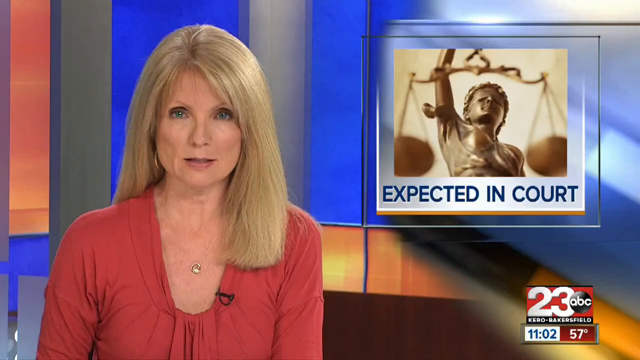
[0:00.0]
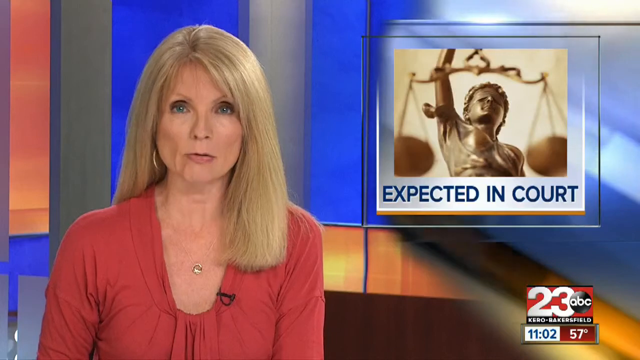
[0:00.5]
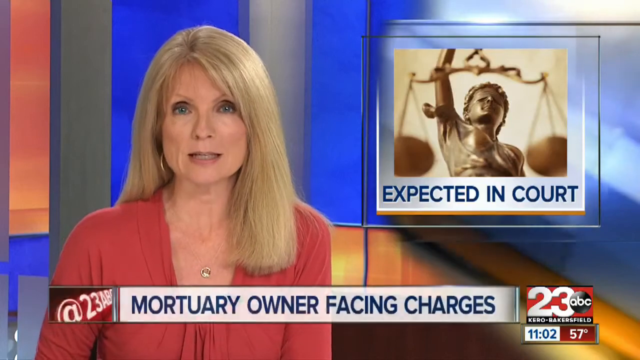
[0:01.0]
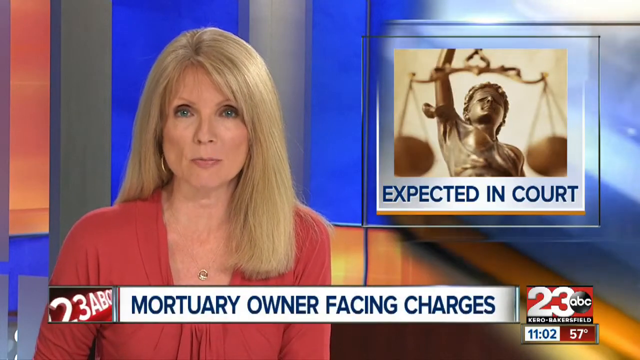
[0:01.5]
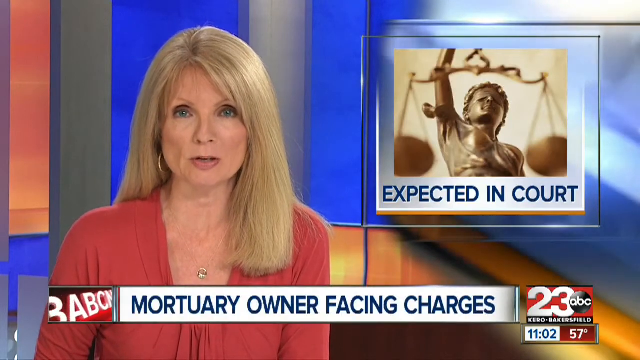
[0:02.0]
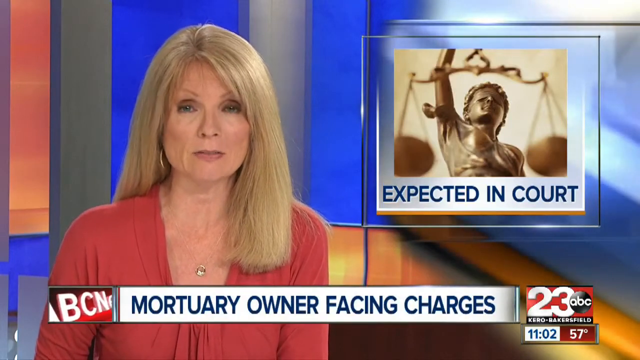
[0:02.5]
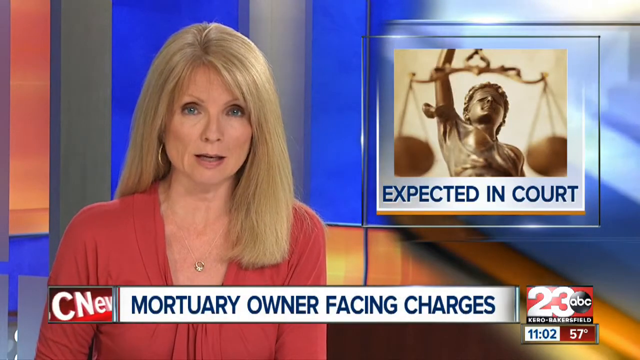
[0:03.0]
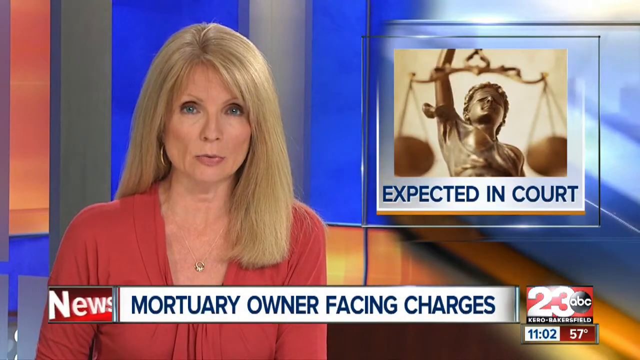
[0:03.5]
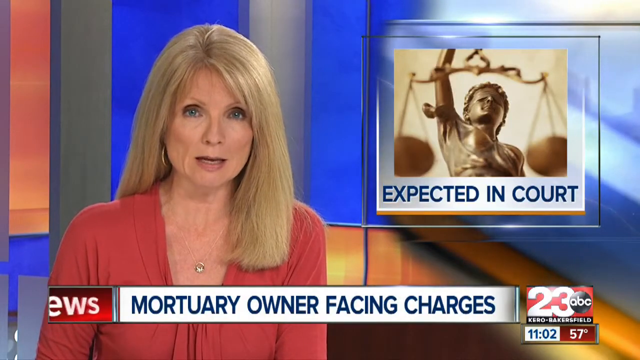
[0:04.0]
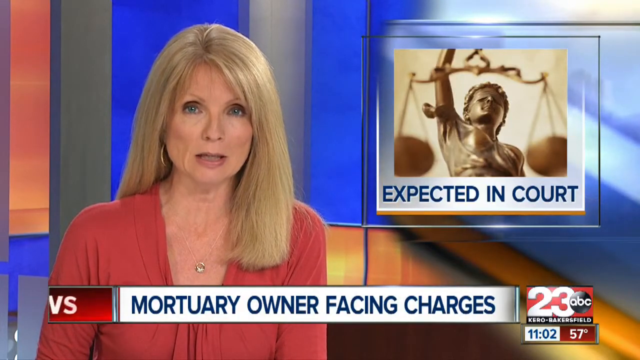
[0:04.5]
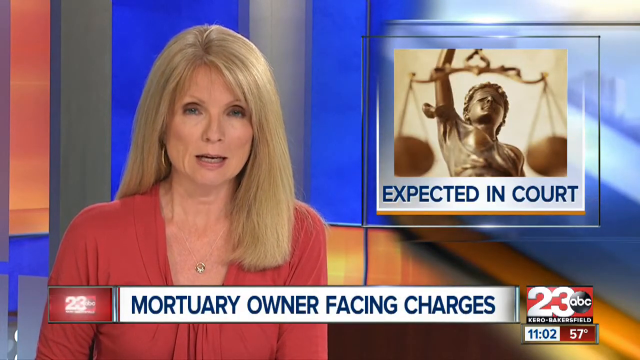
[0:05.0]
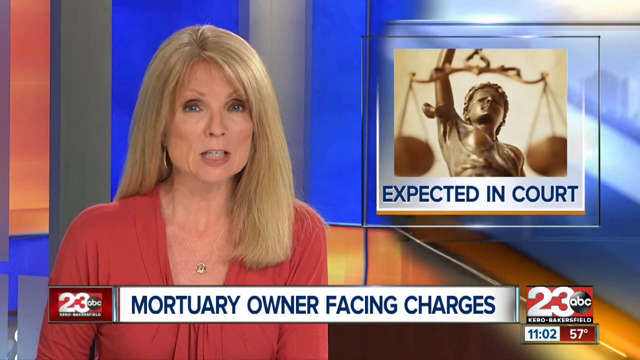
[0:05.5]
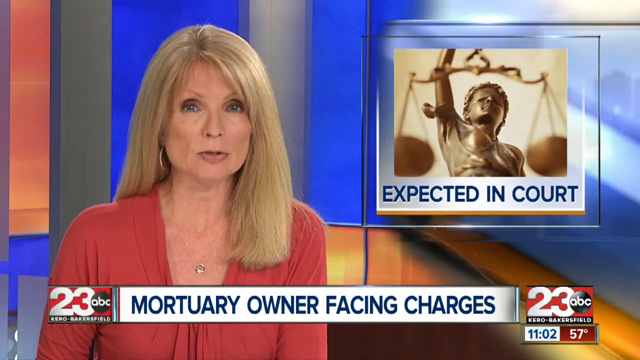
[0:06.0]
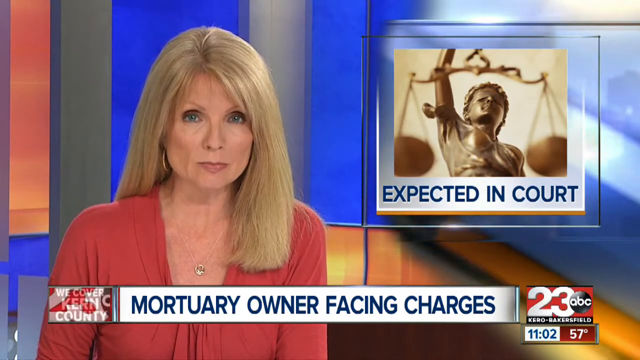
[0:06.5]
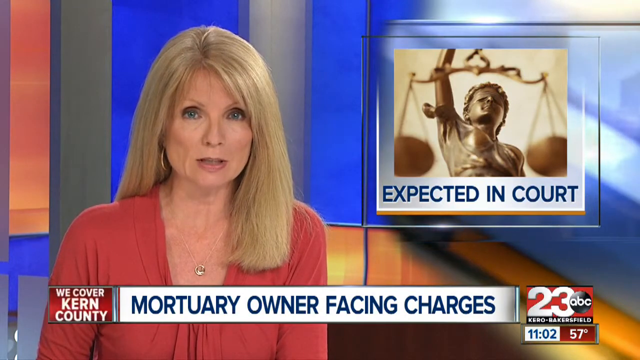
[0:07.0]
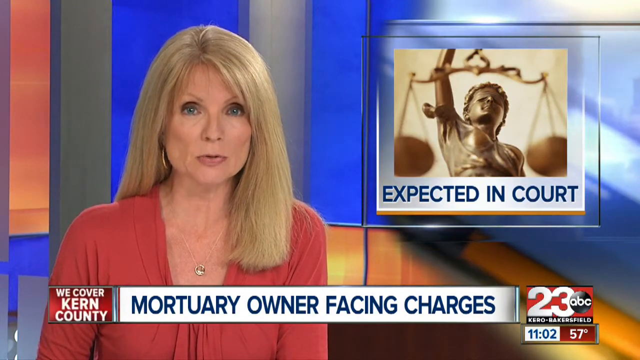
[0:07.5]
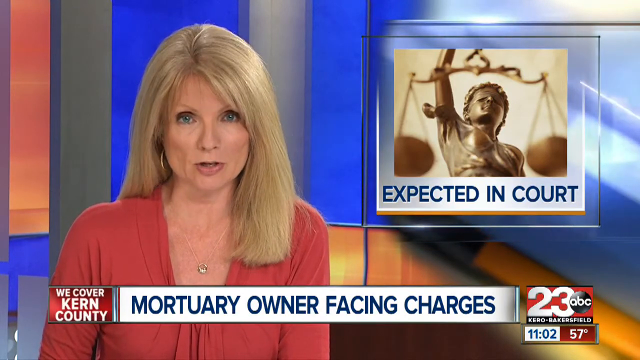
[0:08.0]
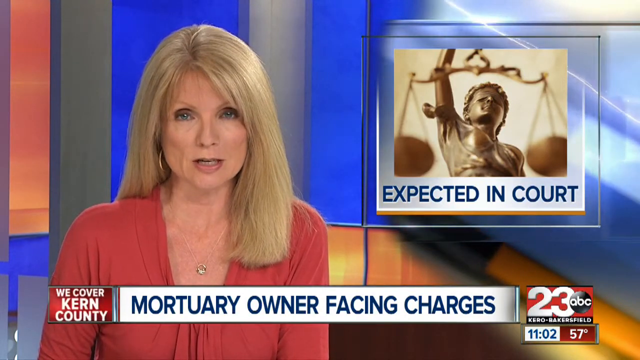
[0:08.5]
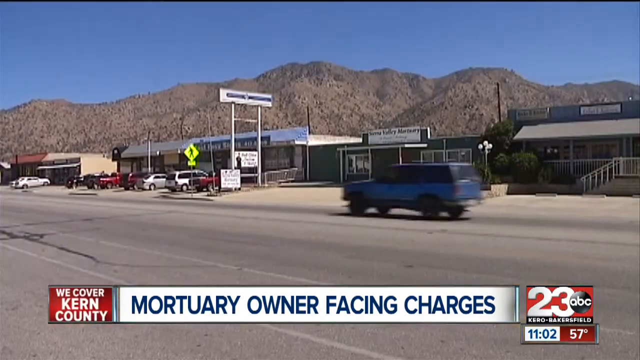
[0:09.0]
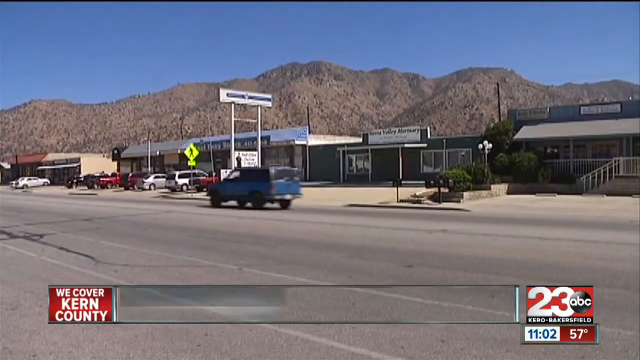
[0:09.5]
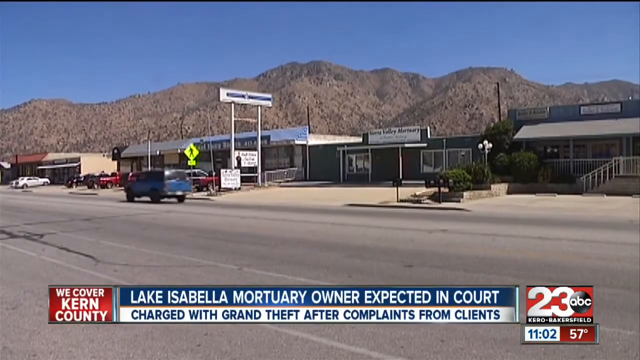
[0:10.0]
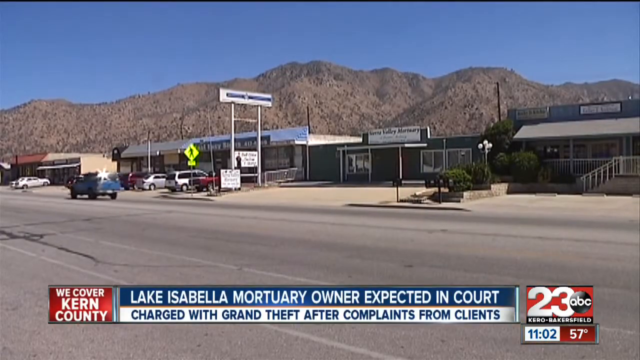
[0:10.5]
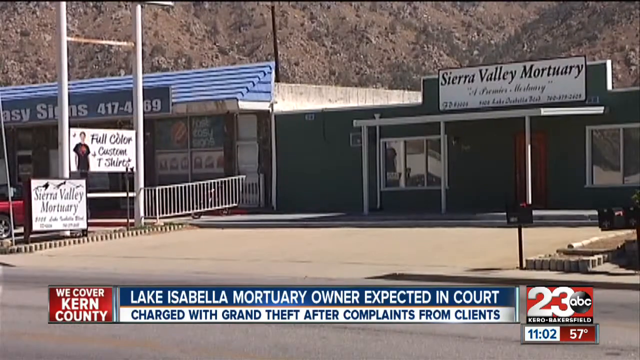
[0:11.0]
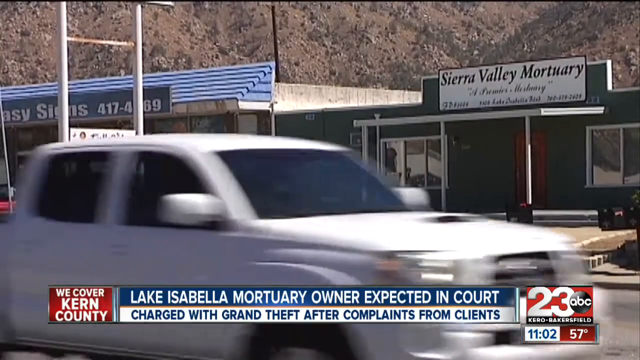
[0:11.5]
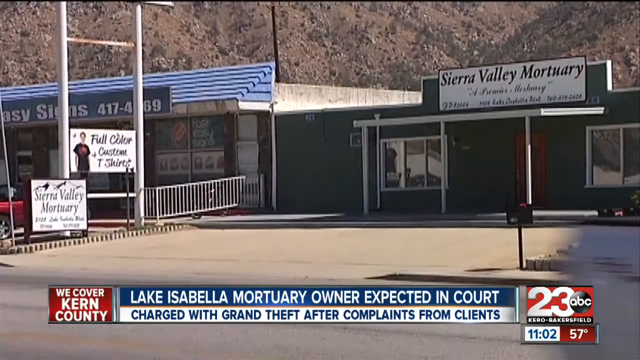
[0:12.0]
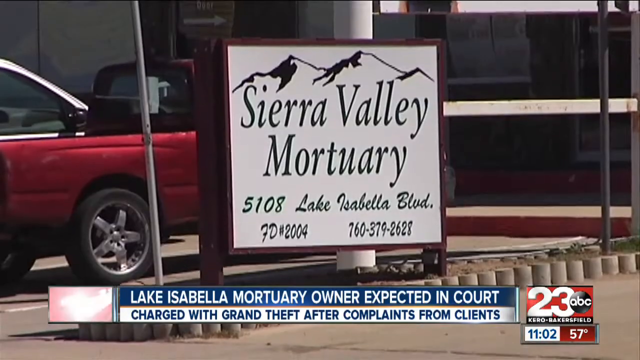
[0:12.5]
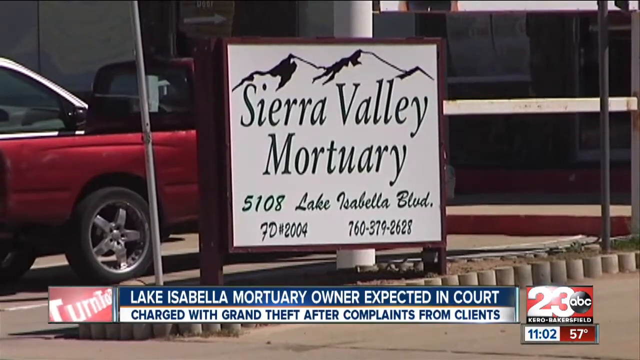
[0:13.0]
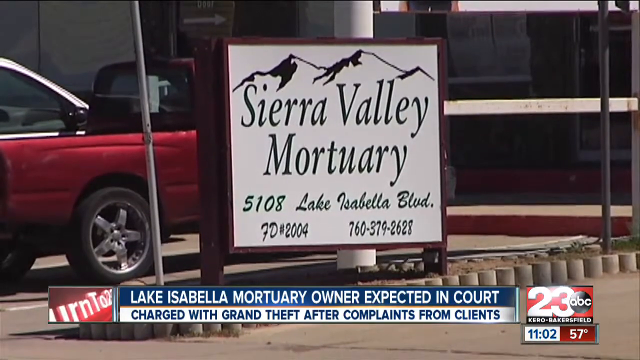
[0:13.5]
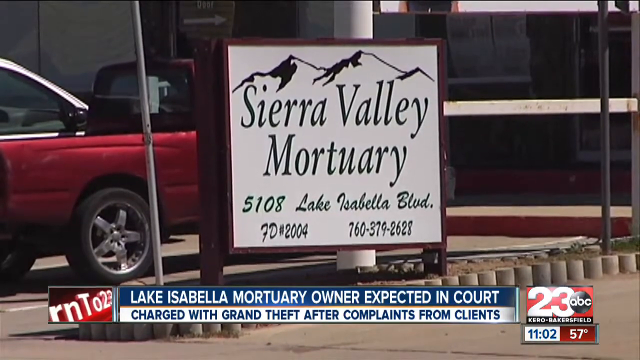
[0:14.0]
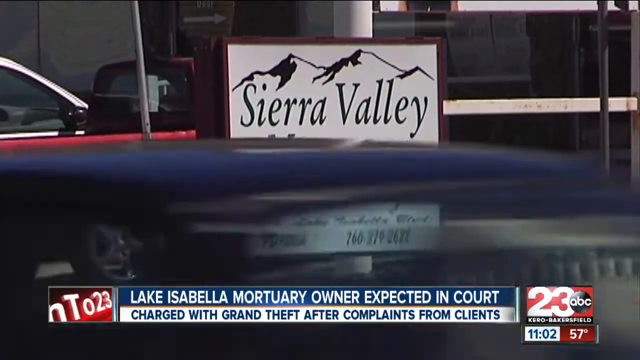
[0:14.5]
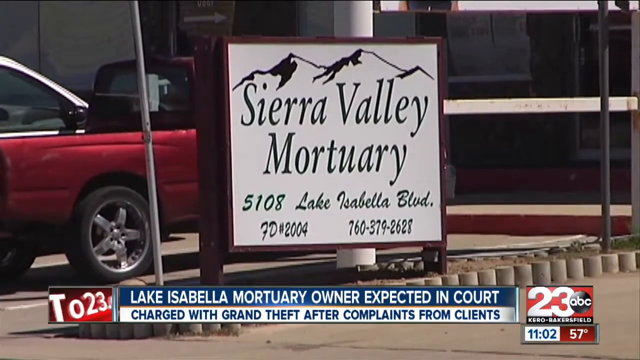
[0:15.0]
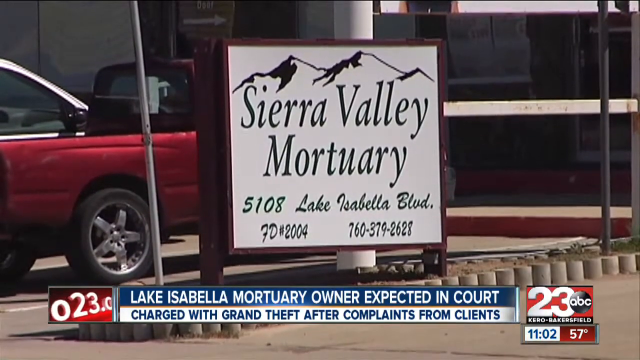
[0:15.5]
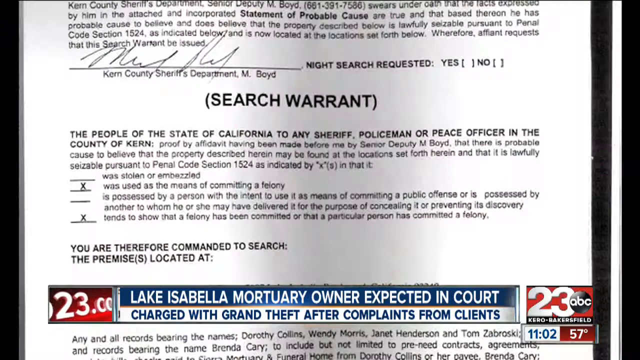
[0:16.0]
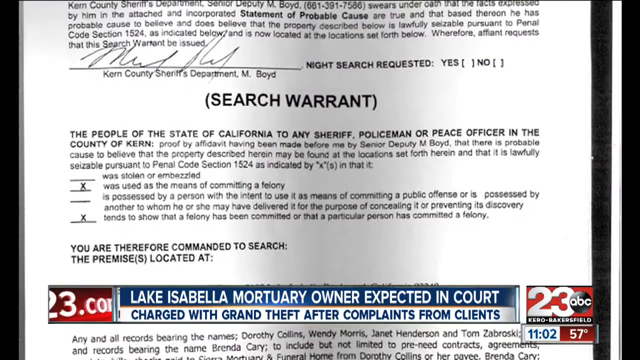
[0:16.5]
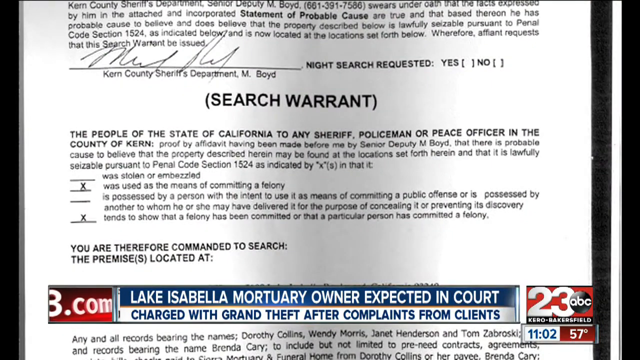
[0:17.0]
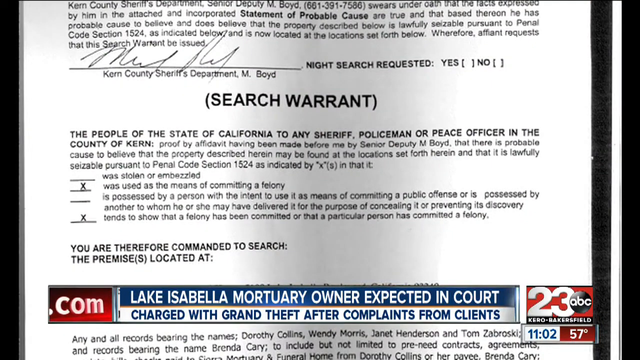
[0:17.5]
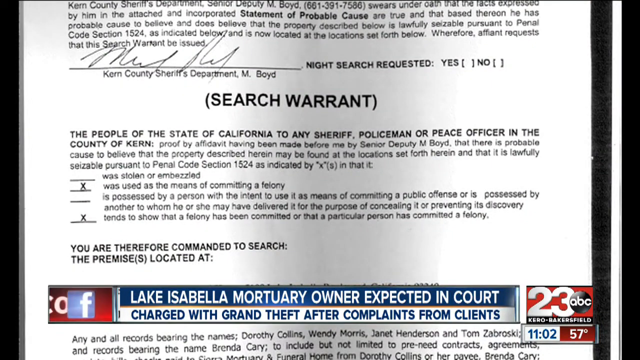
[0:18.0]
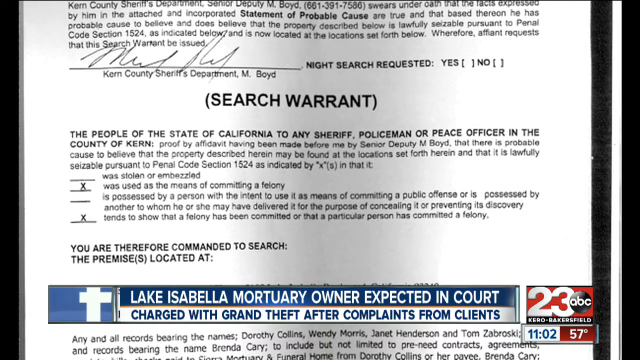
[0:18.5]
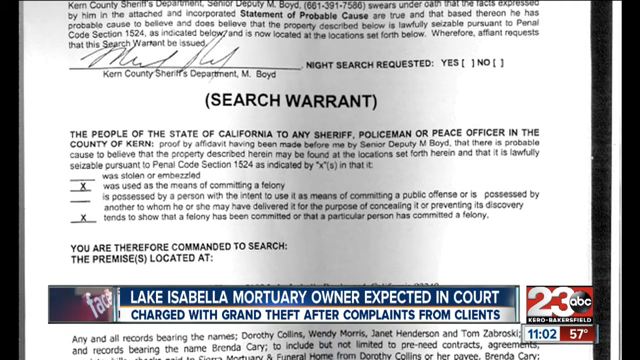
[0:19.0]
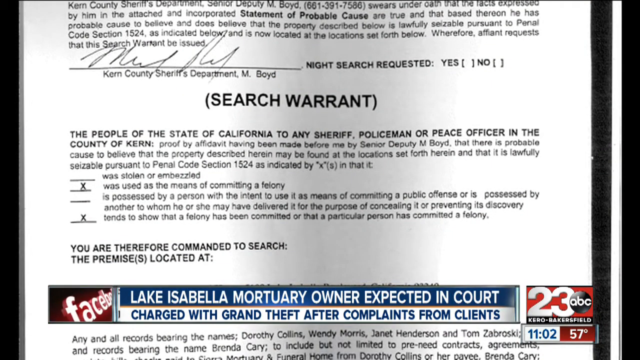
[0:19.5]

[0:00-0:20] A statue of a justice symbol holding a scale is shown; the figure holding the scale looks like a young boy or a woman. The text "in court" appears. 23 ABC's headline reads "mortuary owner facing charges." A woman with very straight blonde hair wears a red dress or other red clothing, a gold necklace and gold earrings. The video then shows Lake Isabella and Sierra Valley Mortuary.